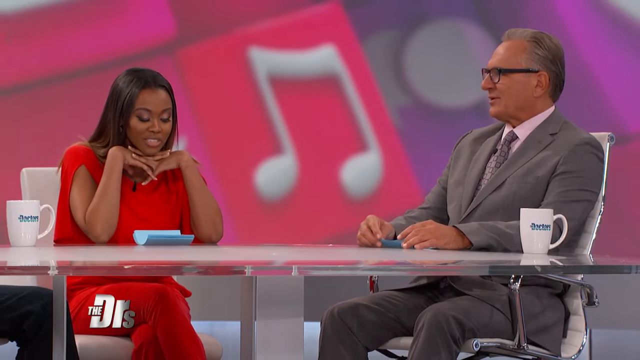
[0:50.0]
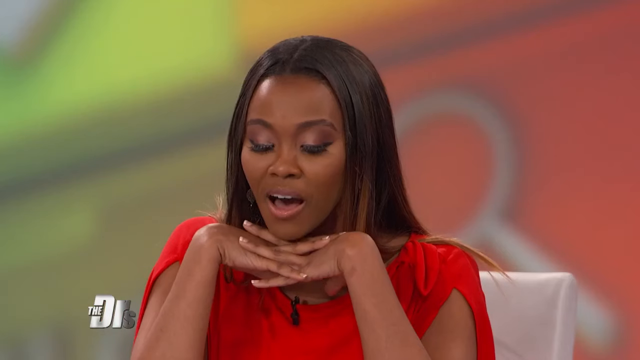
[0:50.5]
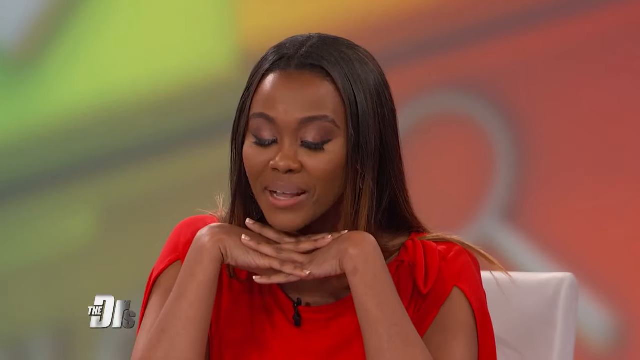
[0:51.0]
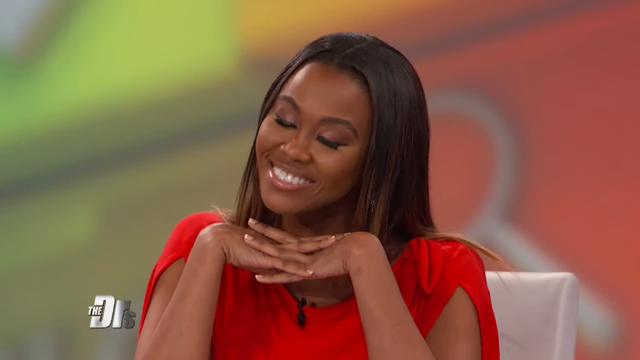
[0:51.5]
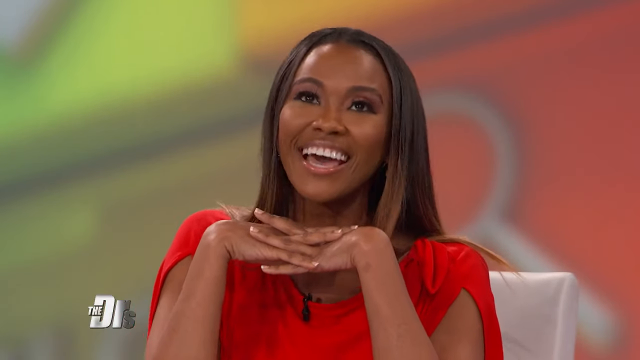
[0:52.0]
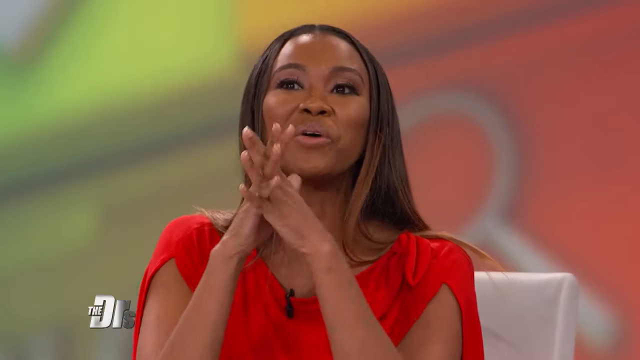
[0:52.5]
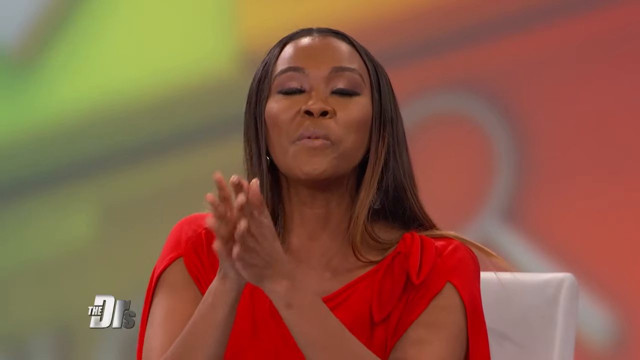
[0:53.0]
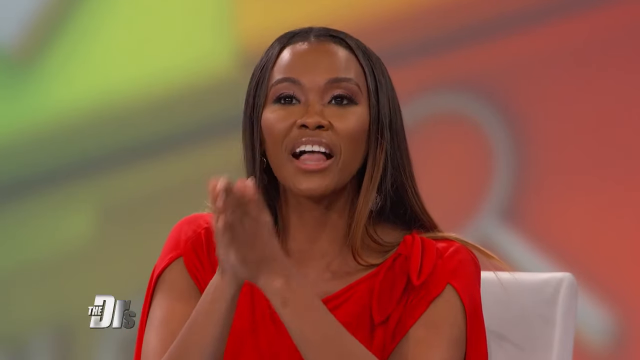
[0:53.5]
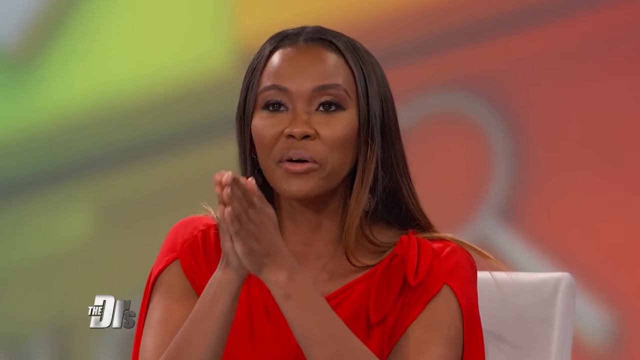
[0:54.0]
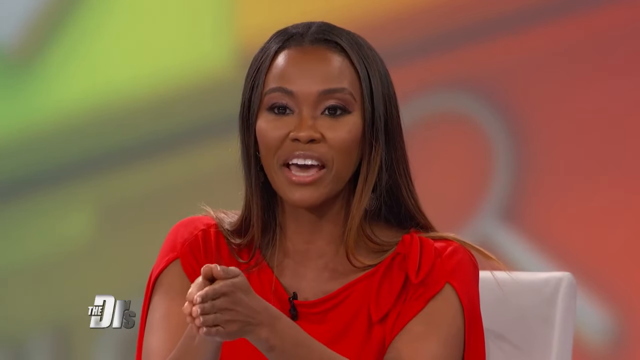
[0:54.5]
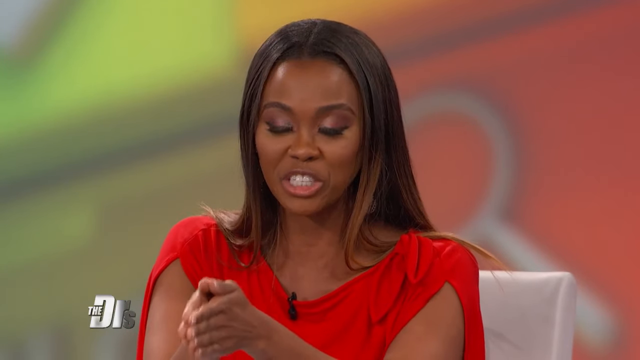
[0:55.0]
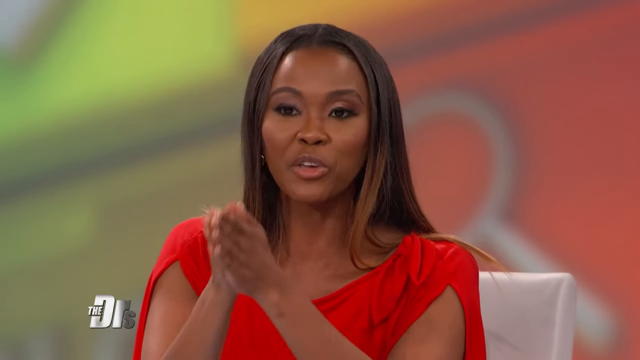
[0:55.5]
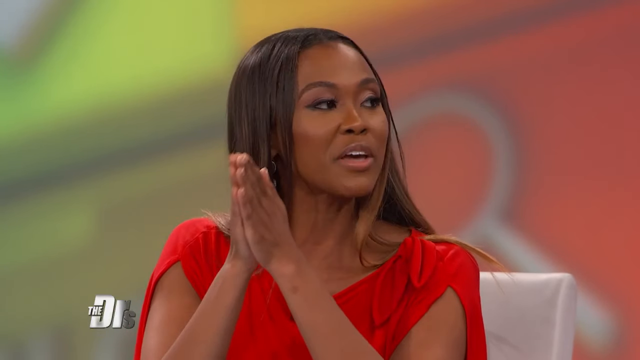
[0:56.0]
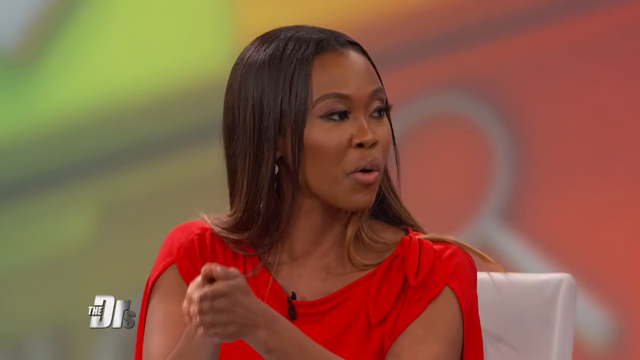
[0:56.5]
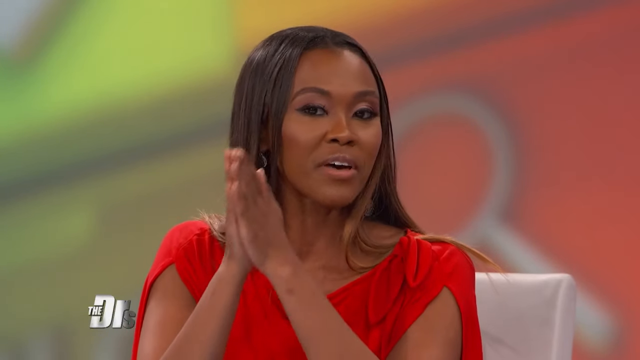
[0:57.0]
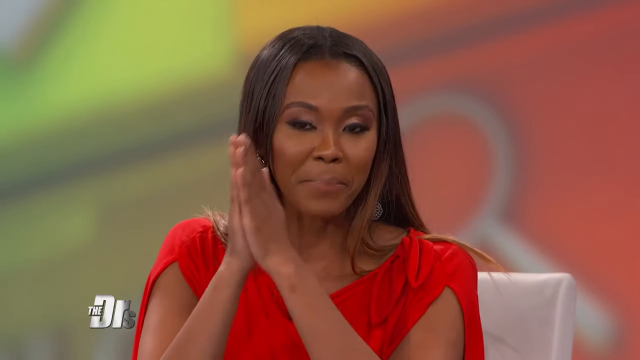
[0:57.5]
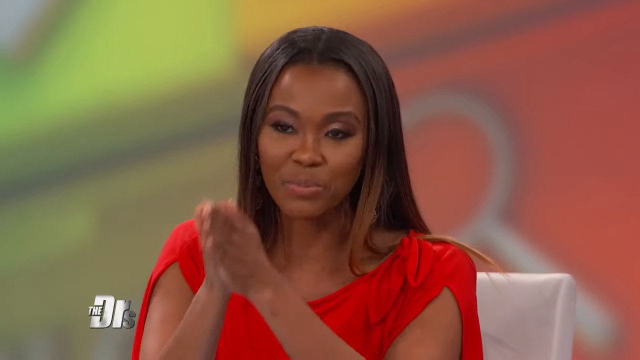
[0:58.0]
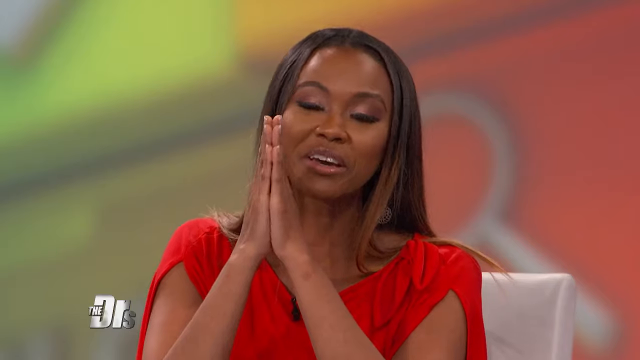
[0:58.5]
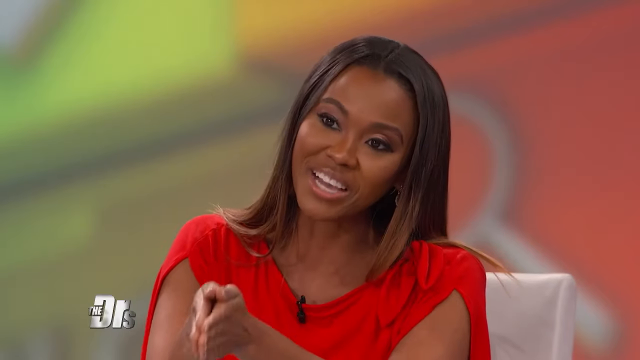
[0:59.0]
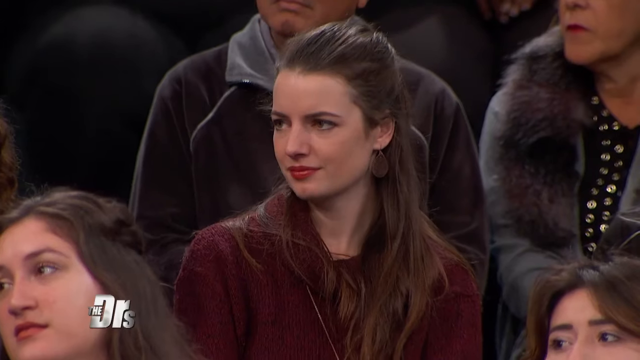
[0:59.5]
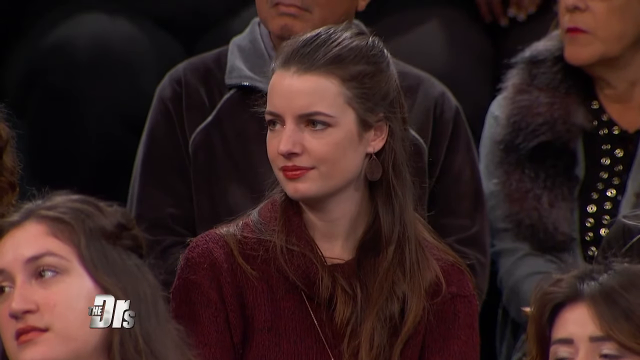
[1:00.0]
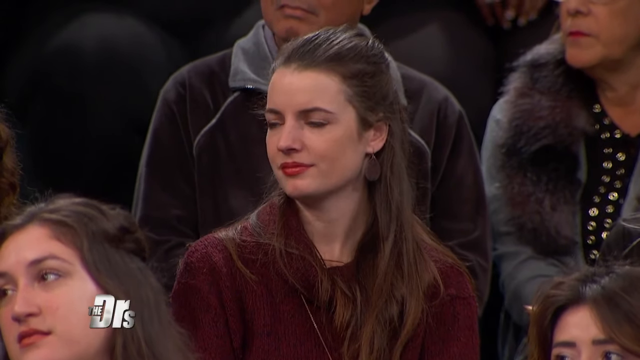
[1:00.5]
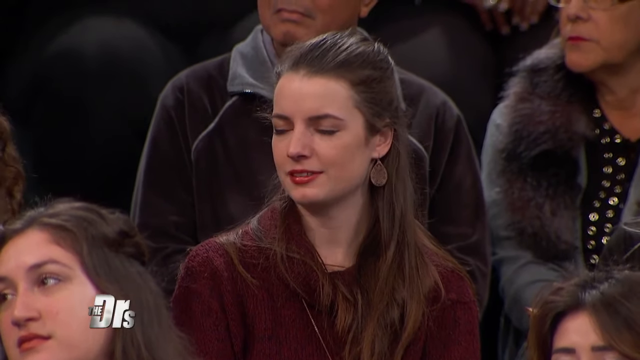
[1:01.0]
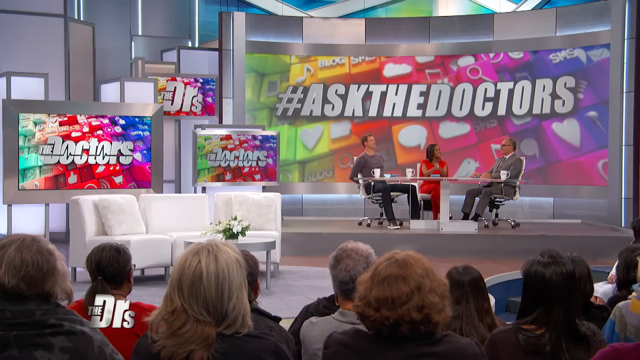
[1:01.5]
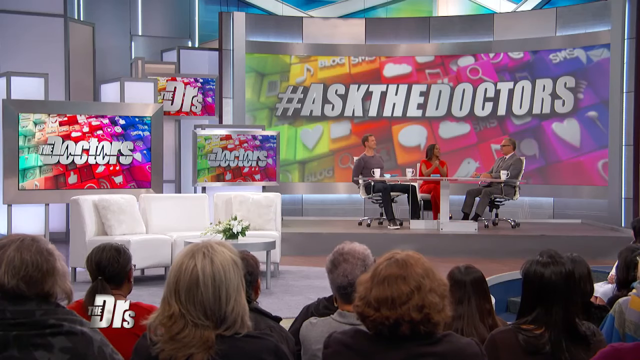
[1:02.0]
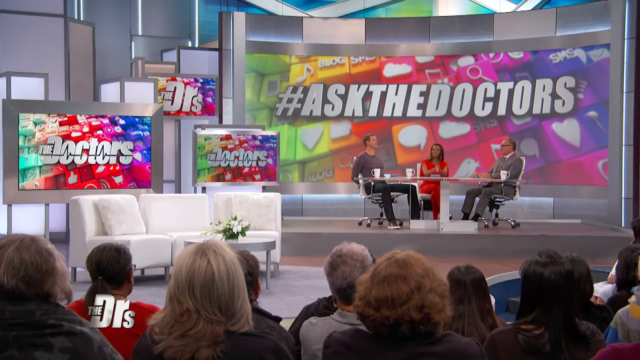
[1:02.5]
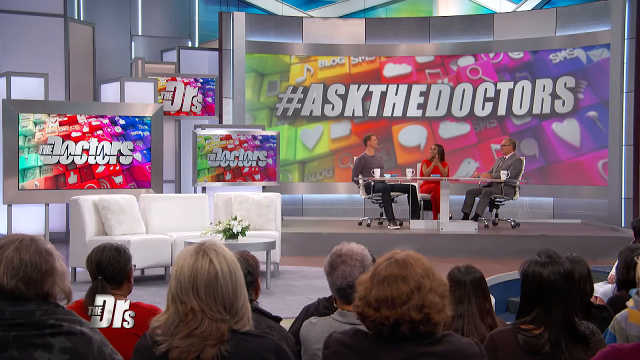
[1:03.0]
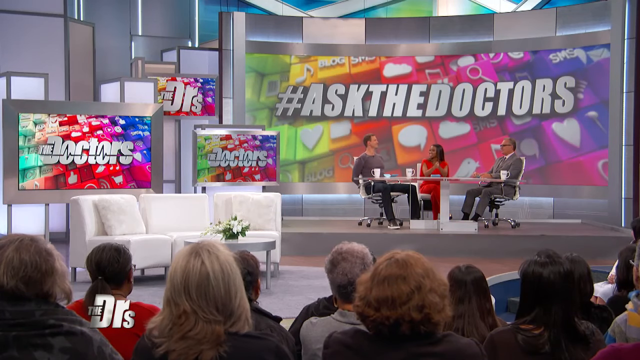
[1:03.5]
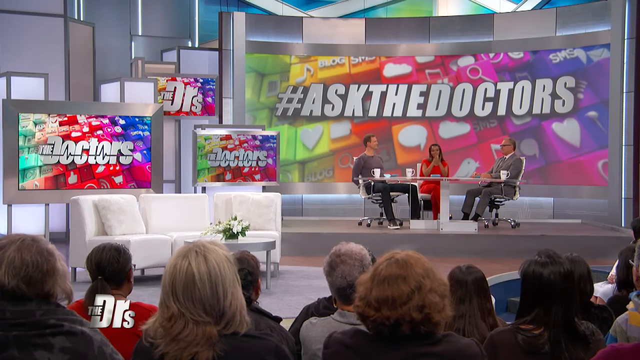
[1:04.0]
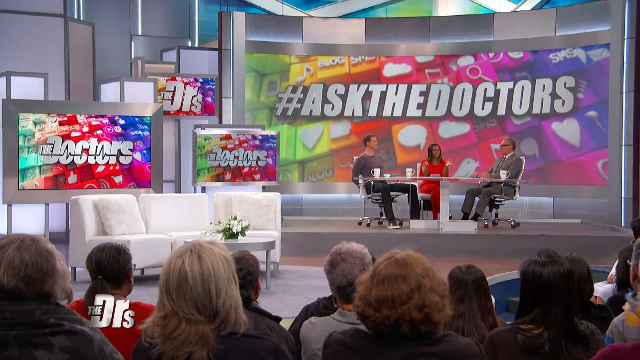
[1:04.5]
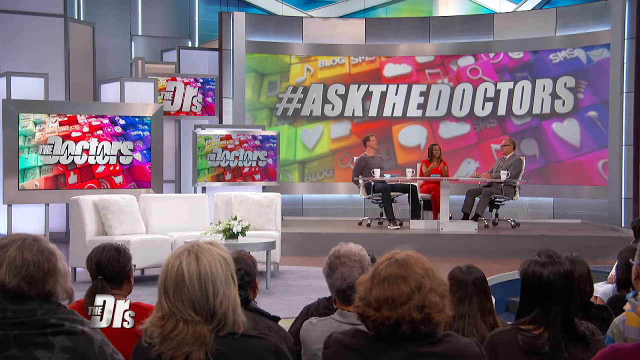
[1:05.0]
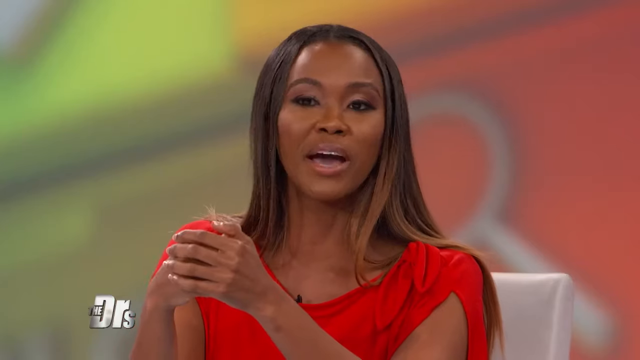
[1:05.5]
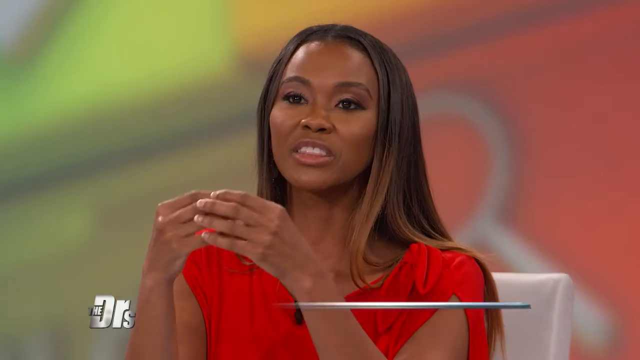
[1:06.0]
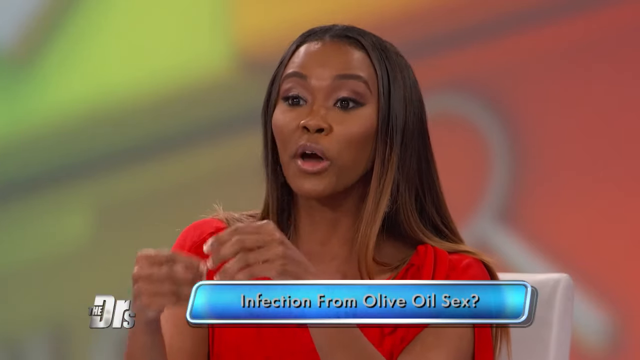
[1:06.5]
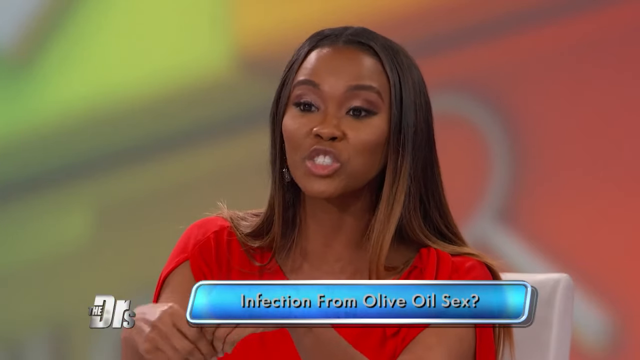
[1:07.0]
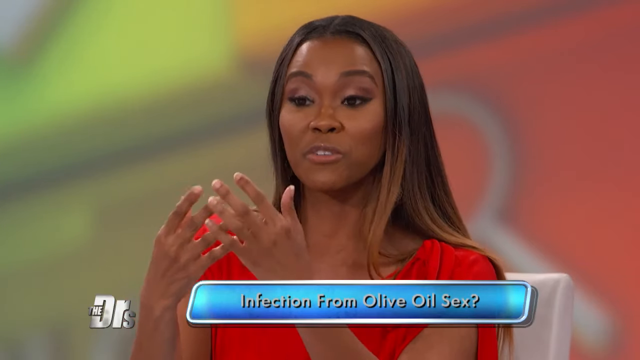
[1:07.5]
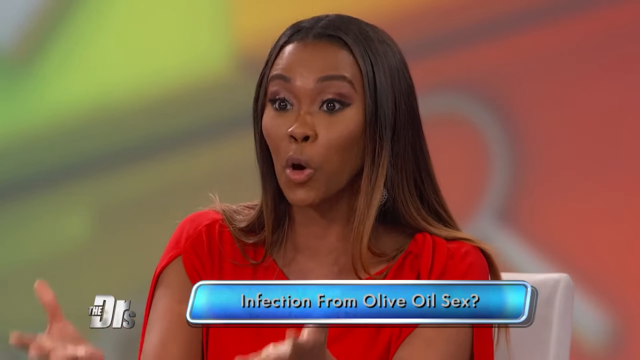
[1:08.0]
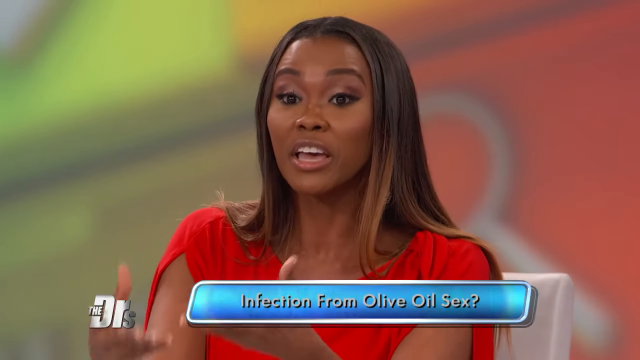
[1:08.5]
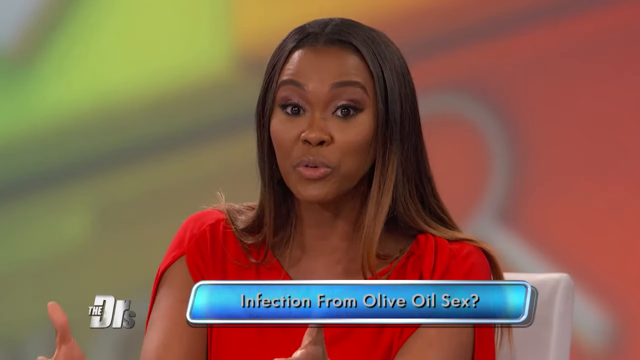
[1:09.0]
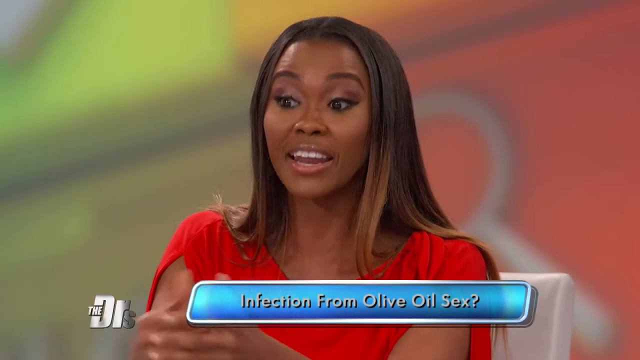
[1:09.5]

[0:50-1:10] With her fingers locked, the woman places her hands under her chin. She reads something on the table, then looks up at the camera and places her hands in a prayer position in front of her, still speaking. She looks over to her co-host on the left, rocking her hands forward and back. The scene cuts to an audience member, seen from the shoulders up, who looks off to the right and nods her head, seemingly agreeing with the host; other audience members sit around her, and she mouths something. A wide shot then shows the hosts and the stage, with marquees bearing the name of the show. A tight shot follows of the host in the middle, who continues to speak and make a point about the question. She looks over to the host on her right, puts her fingers together, and then puts her hands together.